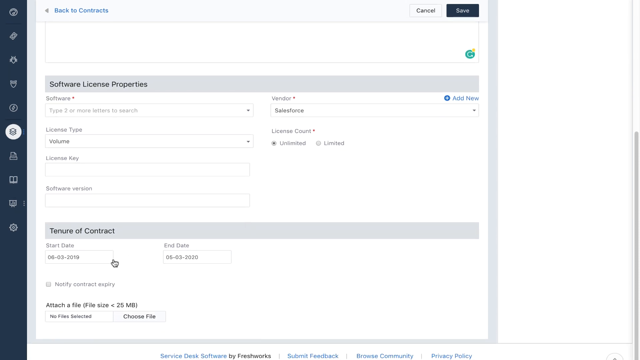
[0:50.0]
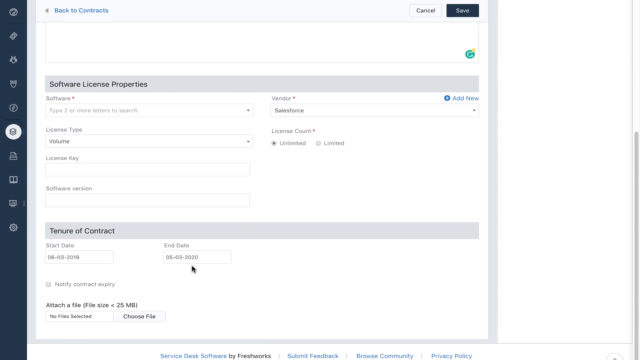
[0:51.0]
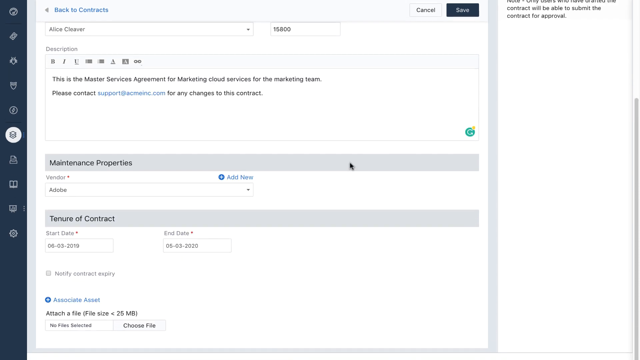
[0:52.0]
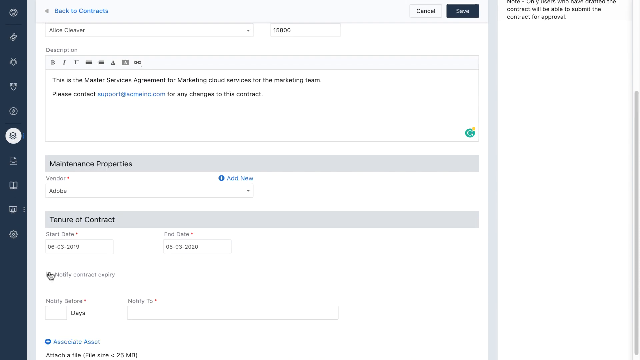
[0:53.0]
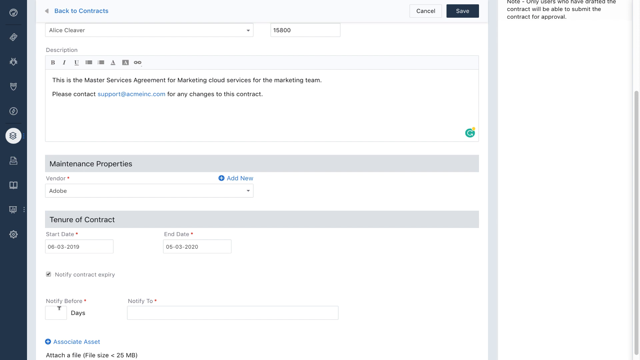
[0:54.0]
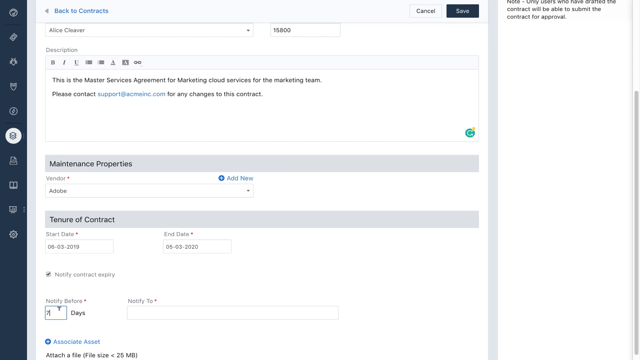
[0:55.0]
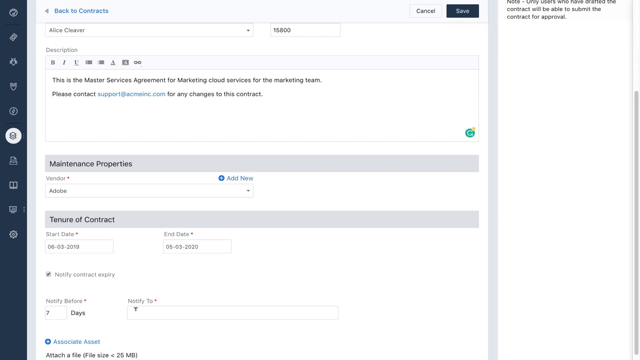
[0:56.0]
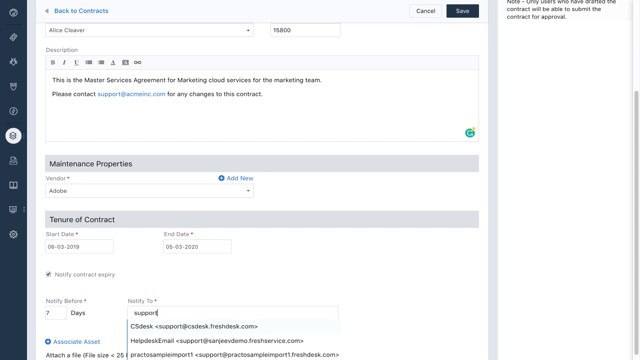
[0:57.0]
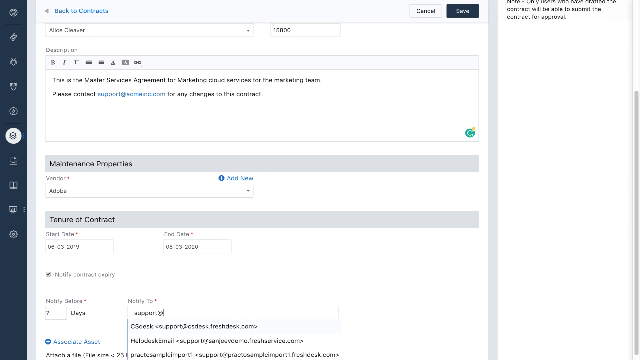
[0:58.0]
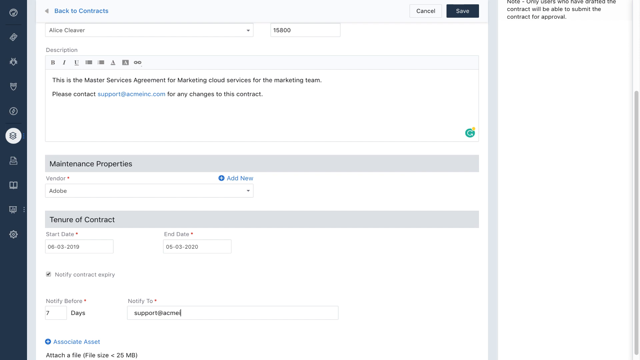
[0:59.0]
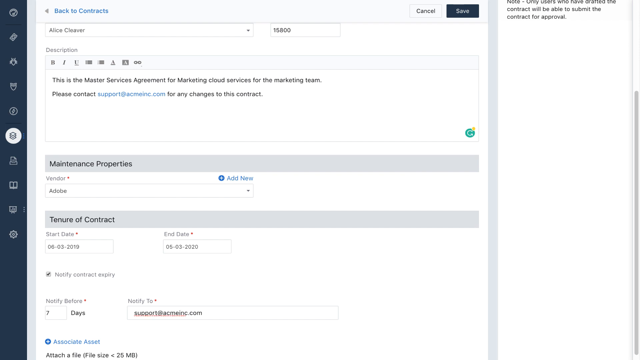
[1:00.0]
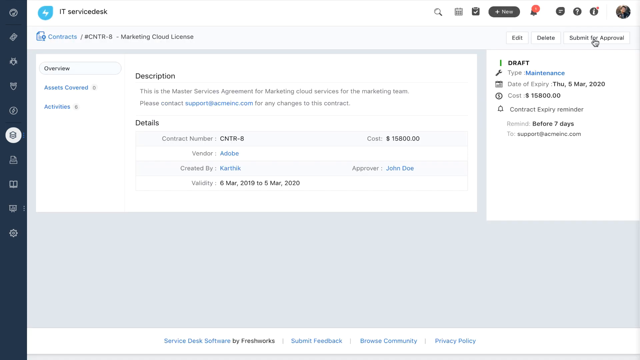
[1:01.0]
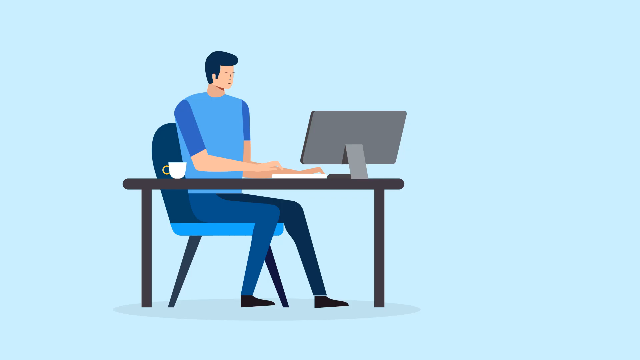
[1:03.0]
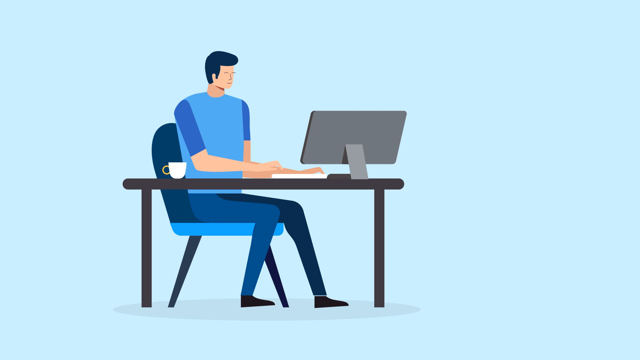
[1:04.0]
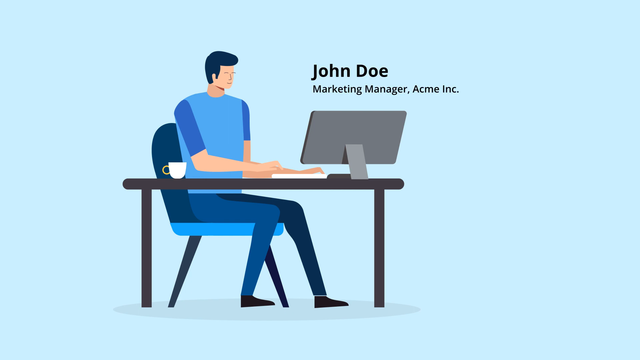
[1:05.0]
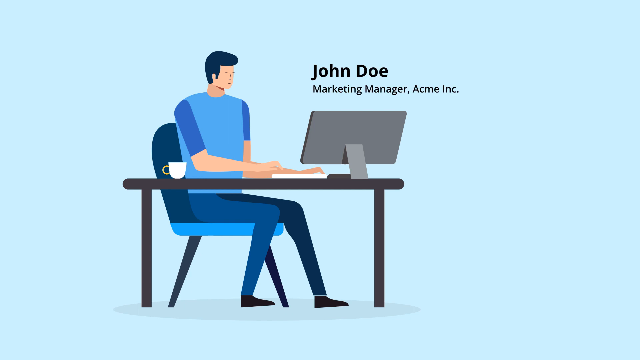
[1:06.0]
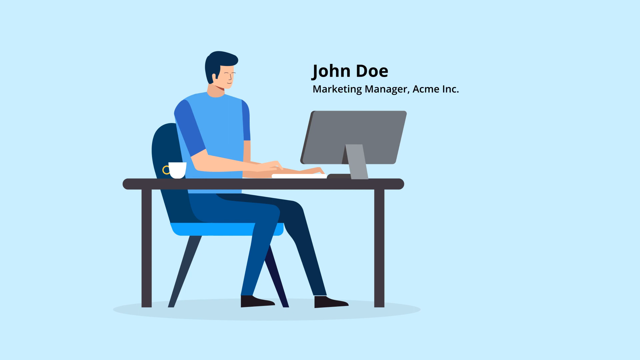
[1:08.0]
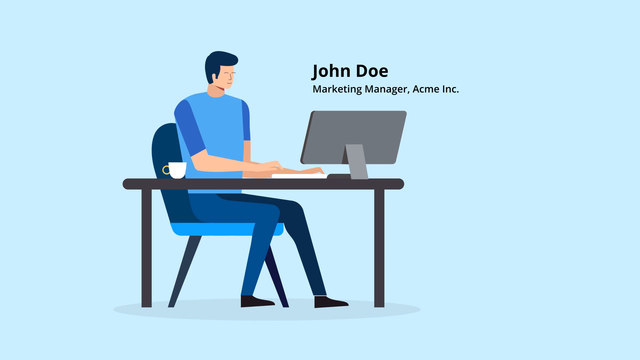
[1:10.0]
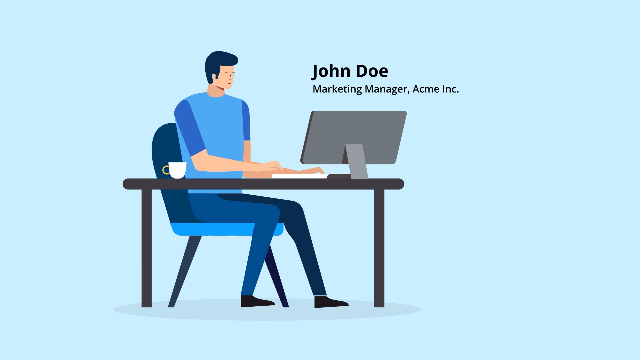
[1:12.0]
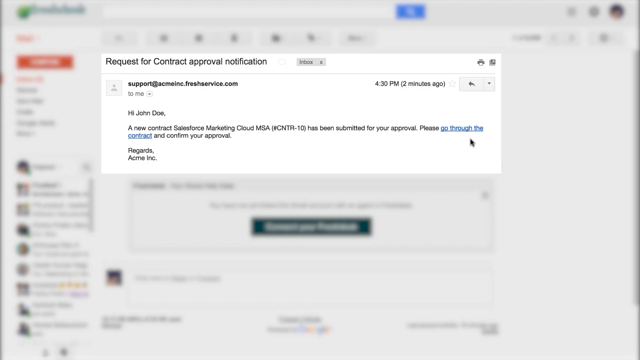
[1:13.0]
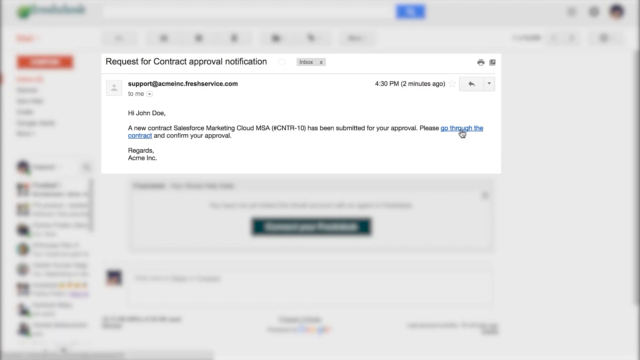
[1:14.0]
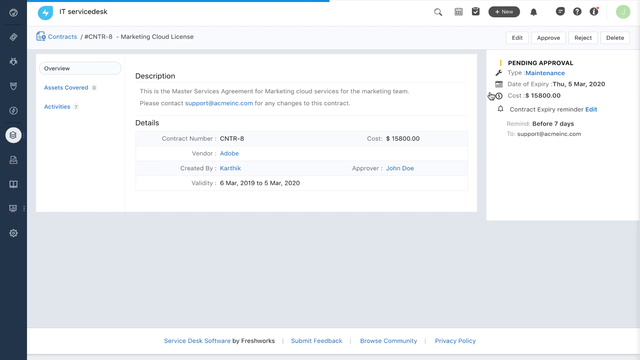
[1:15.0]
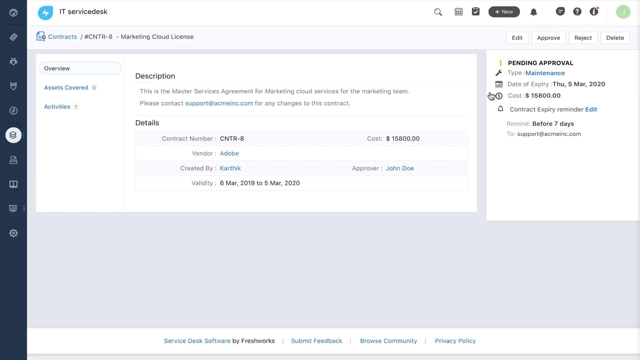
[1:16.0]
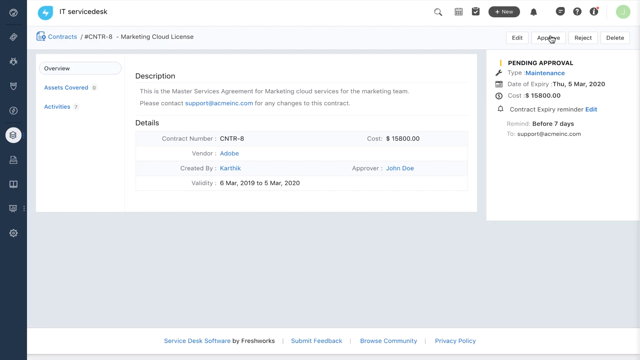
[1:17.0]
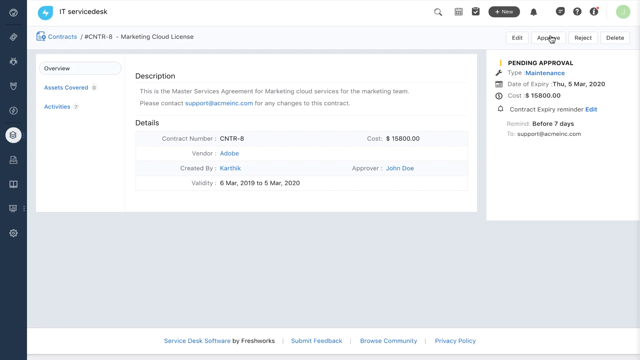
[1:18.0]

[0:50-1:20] The user scrolls down on contract number 5, which shows a start date of 06-03-2019 and an end date of 06-03-2020, a year. The user checks a box labeled "notify contract expiry," and two options appear: "notify before" and "notify to." The user sets notify before to 7 days. The user then clicks the overview button and presses the submit button at the top right. Next, an animated person sits at an office desk with a computer in front of him; the figure is dressed all in blue, and there is a white cap on the table. To the right, text reads "John Doe, Marketing Manager, Acme, Inc." The page switches to a request for contract approval notification, an email reading: "Hi John Doe, a new contract Salesforce Marketing Cloud MSA. Request number 10 has been submitted for your approval. Please go through the contract and confirm your approval. Regards, Acme, Inc." Below is blue text, "Go through the contract," a clickable link to view the contract in the app.